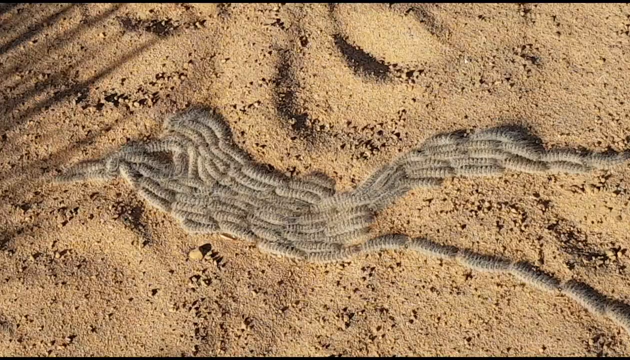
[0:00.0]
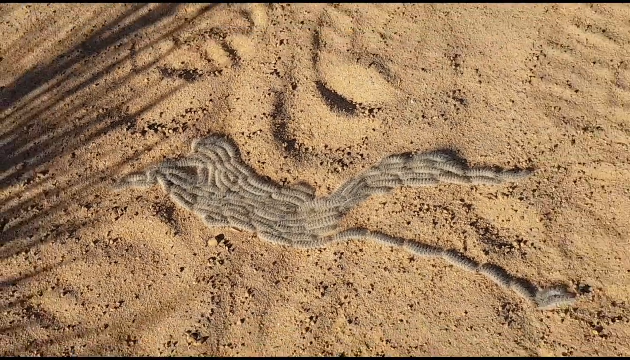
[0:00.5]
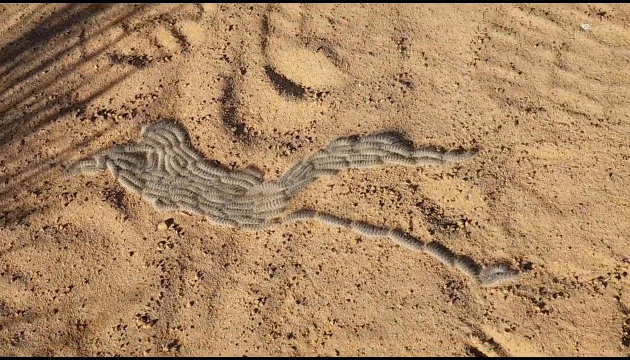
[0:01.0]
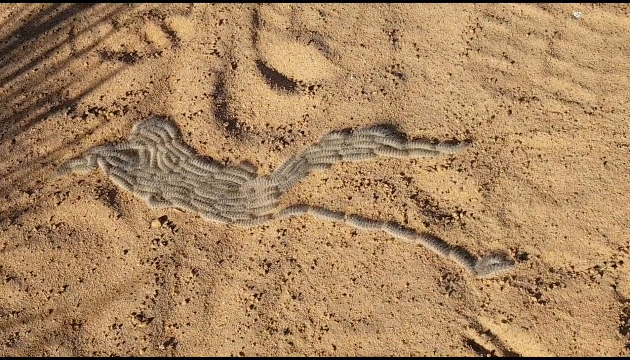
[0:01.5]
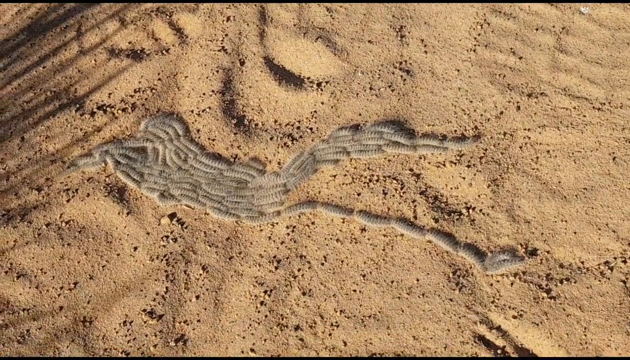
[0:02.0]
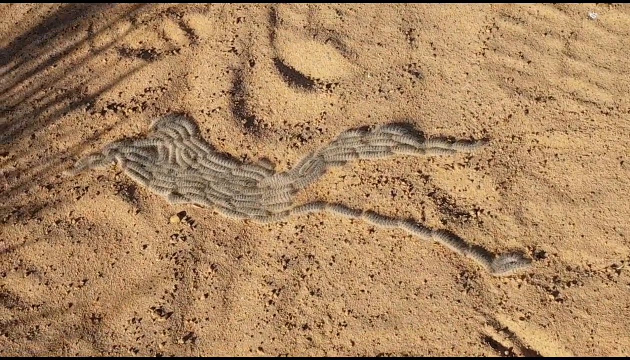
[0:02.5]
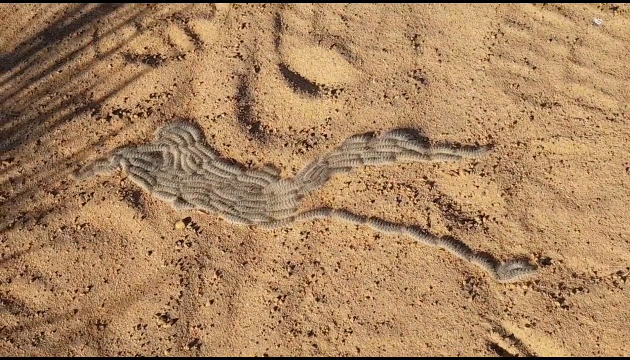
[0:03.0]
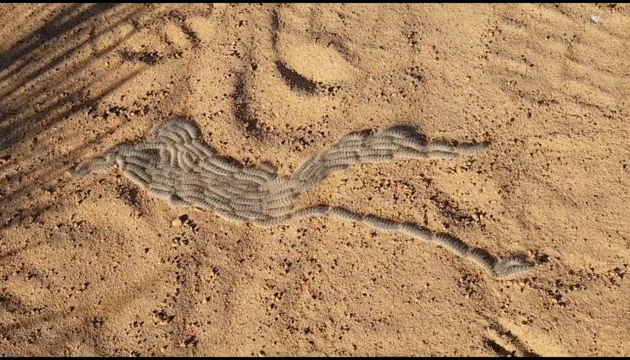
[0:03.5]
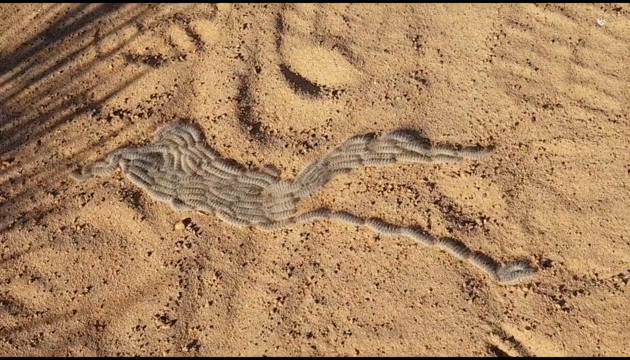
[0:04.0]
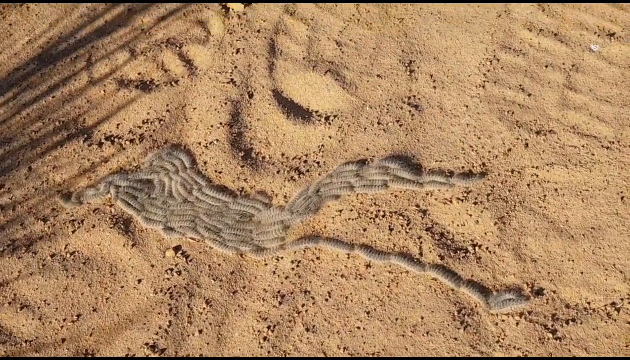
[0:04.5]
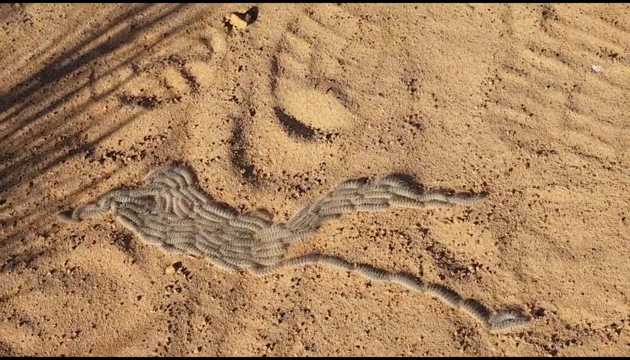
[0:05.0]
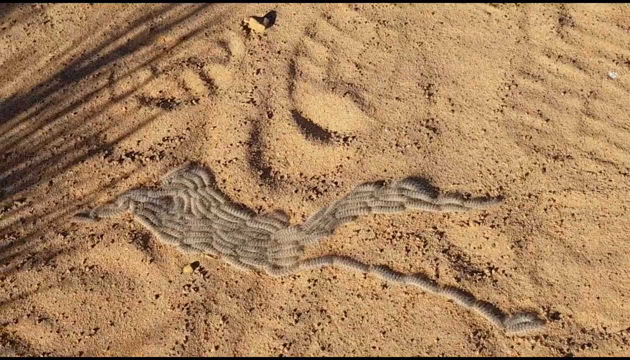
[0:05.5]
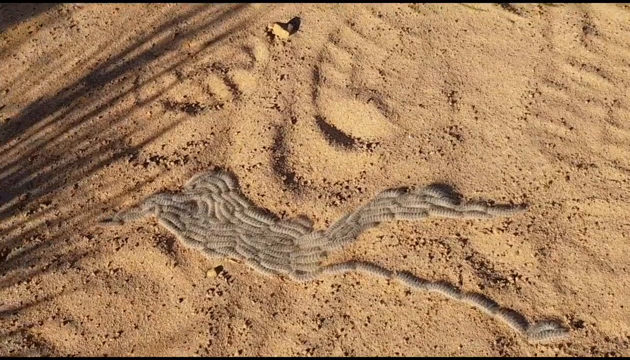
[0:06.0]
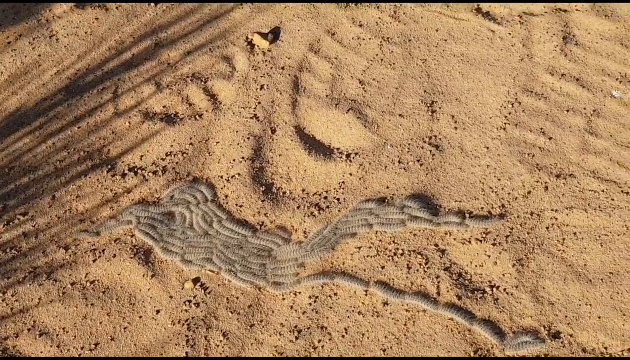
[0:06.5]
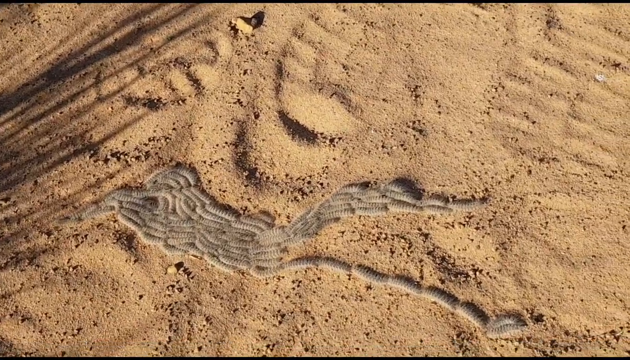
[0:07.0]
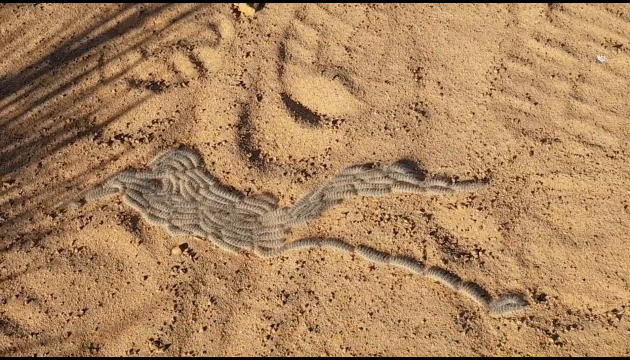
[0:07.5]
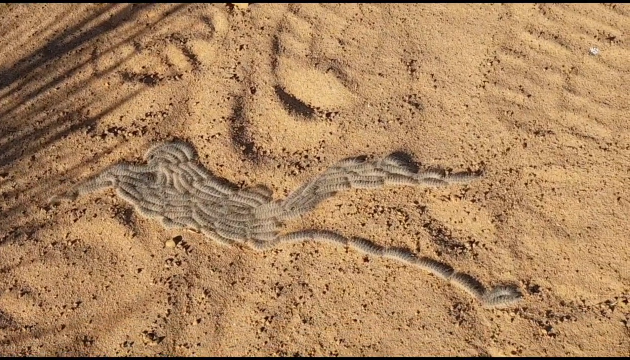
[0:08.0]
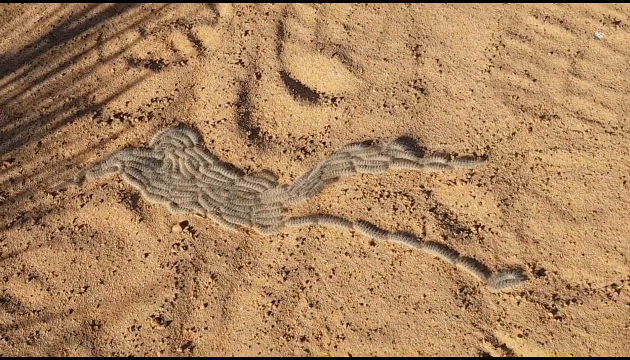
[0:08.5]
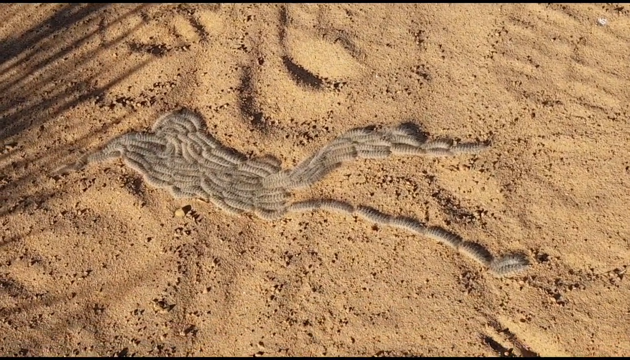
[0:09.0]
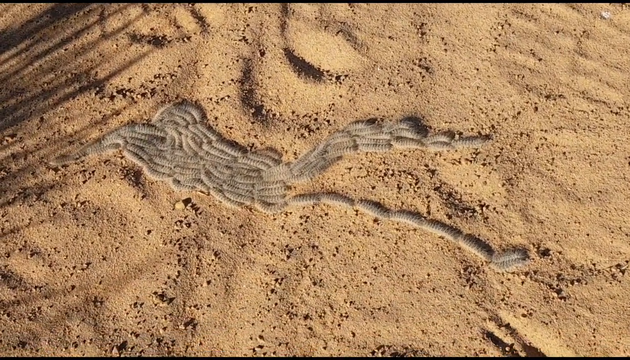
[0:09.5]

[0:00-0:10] Brown sand fills the view, and it looks like a desert. On it is some type of insect or larva that appears to be migrating. The movement is hard to notice without looking closely, but the creatures are inching their way slowly forward. They almost look like some kind of caterpillar. They seem to move together as one, in a kind of formation, and look like some type of larva.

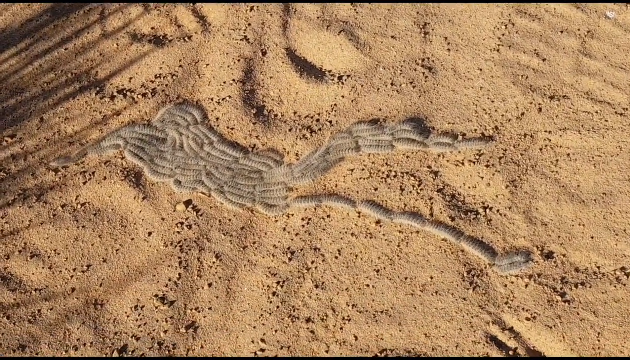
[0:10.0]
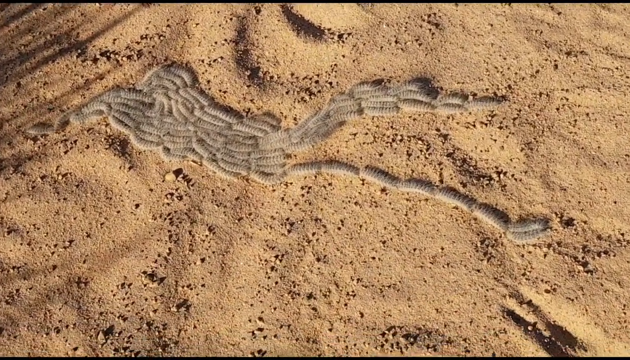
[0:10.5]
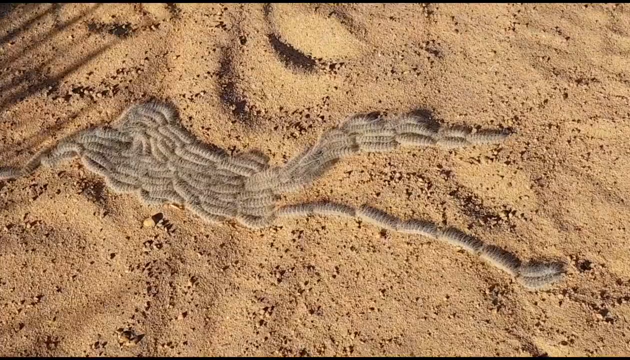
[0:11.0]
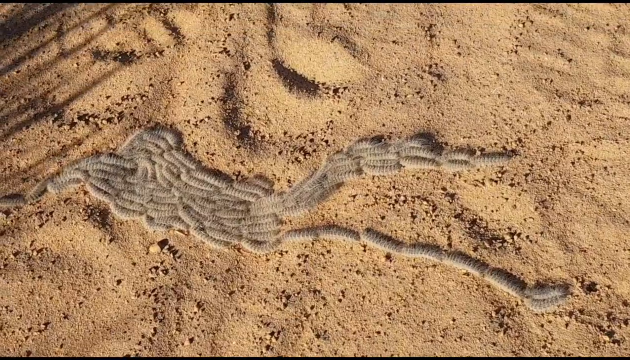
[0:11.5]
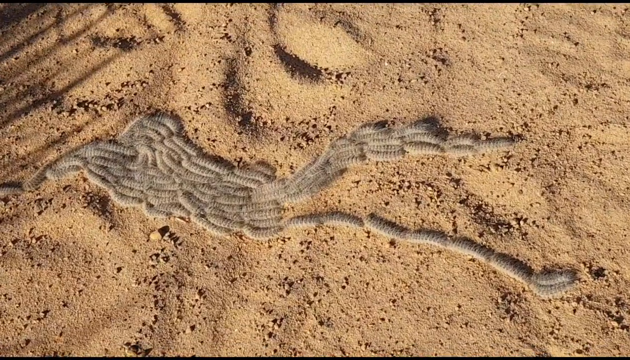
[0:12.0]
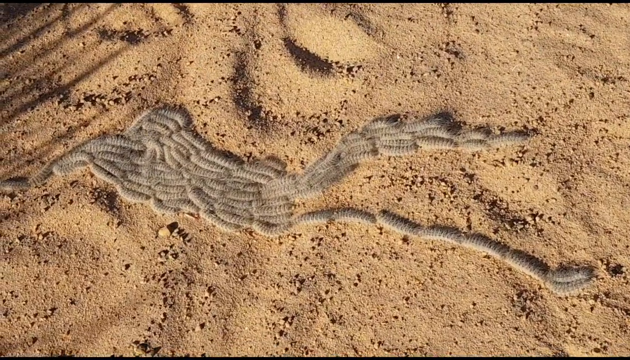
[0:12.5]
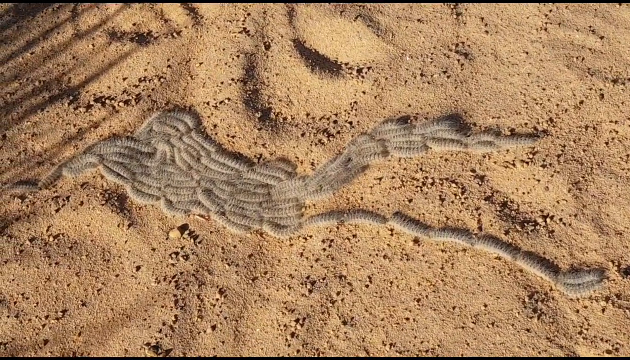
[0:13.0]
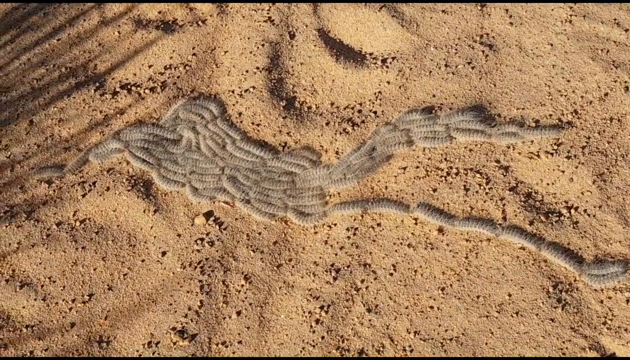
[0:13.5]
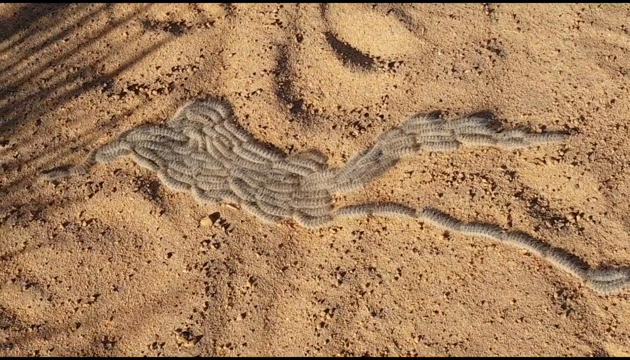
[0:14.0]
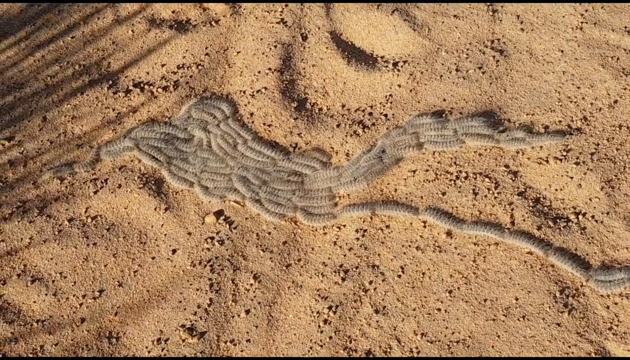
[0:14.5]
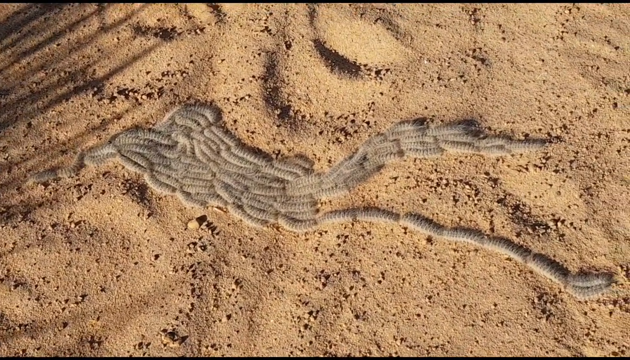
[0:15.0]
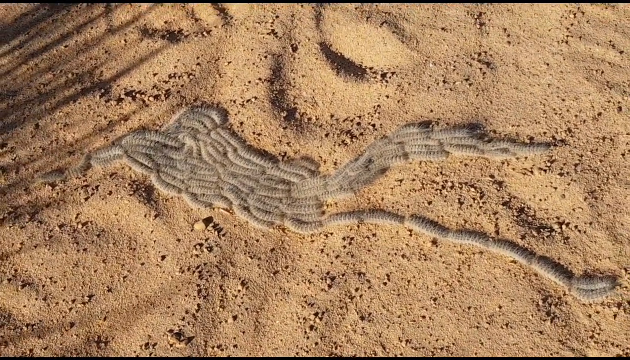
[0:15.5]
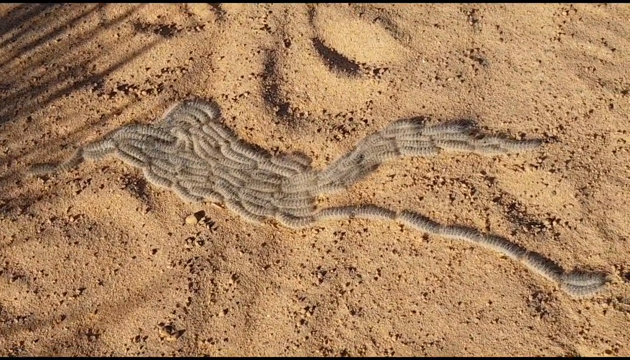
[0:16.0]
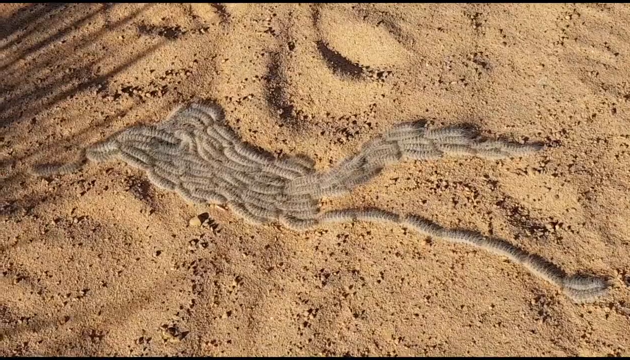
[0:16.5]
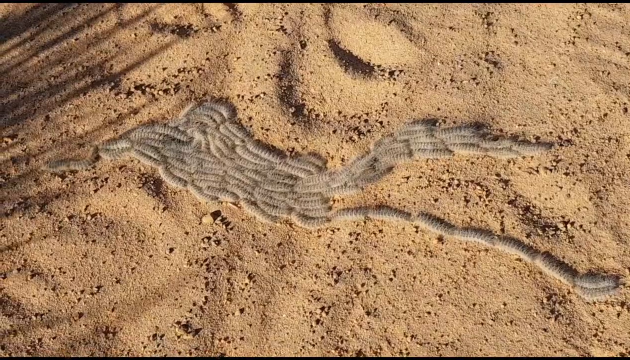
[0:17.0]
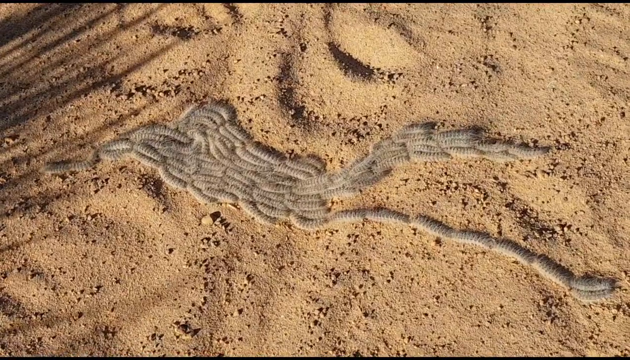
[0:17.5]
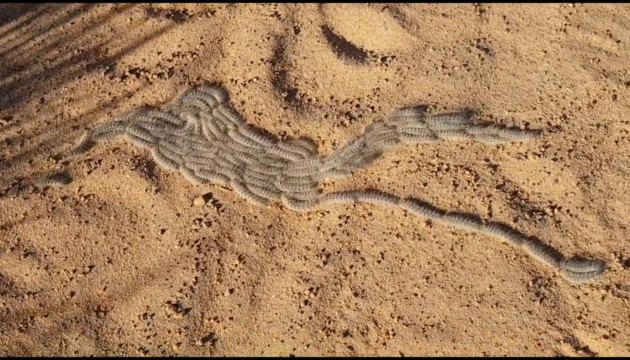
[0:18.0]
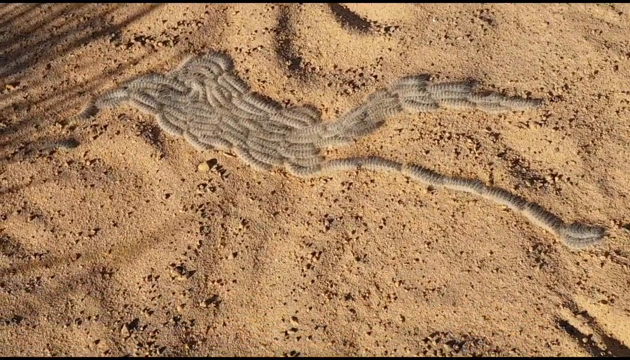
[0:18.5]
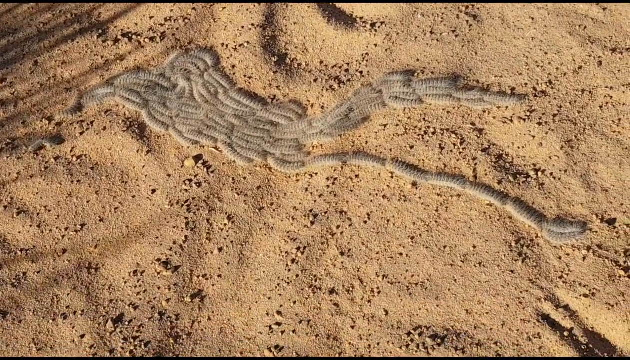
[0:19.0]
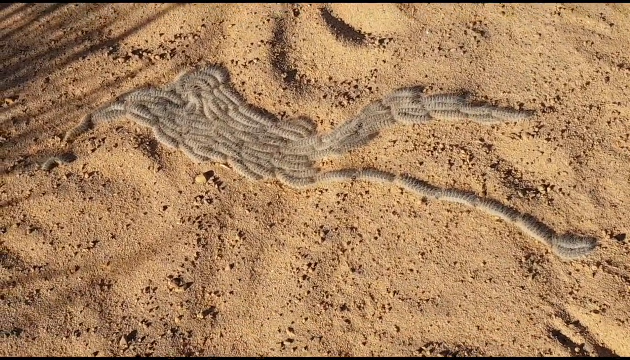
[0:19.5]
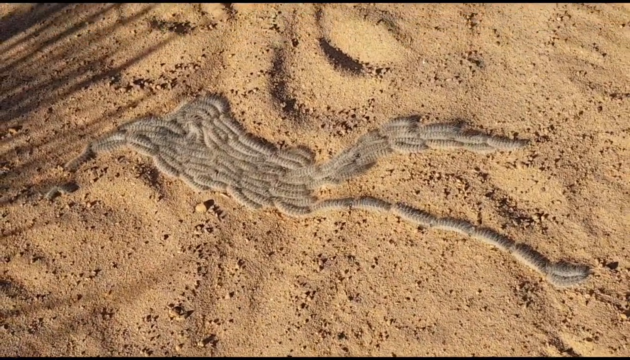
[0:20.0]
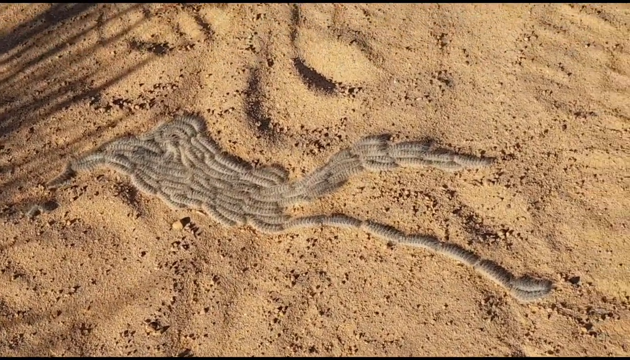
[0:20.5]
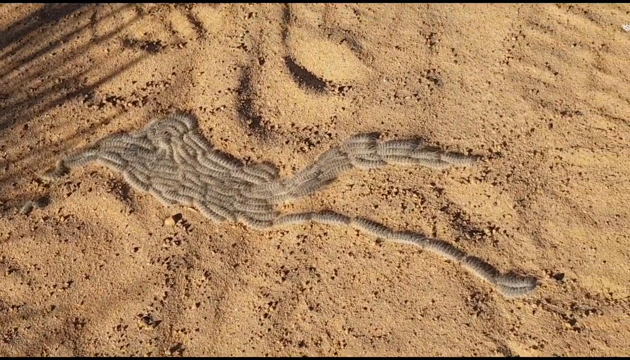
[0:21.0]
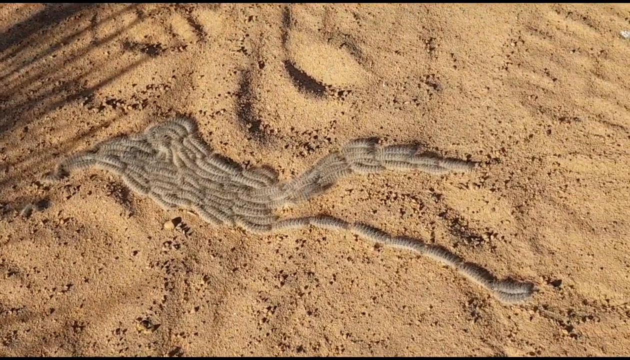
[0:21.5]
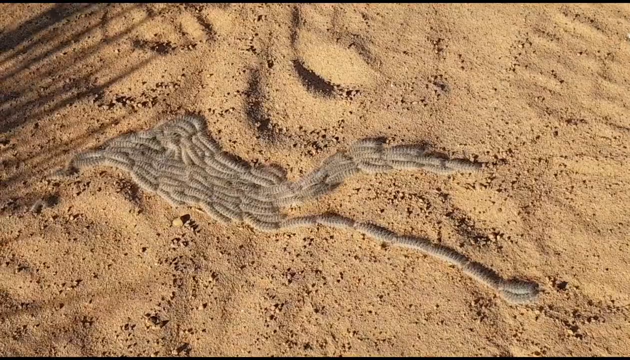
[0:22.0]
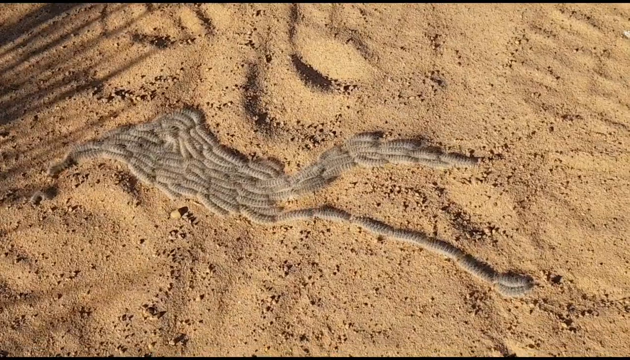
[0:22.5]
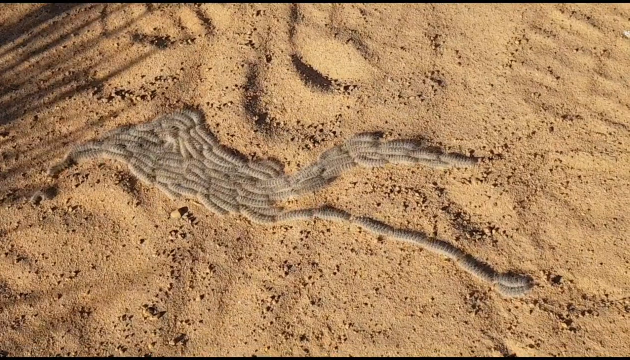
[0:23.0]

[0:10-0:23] Larvae, or some kind of caterpillar, move on the sand or desert floor. They inch slowly, moving together as one in a kind of formation, so slowly that they barely seem to be moving. At the front, one of them has moved off from the rest of the group; it kind of looks like it falls off, moving to the left and jumping off, and it is no longer connected to the other larvae. The larvae are gray and look to be about an inch long, and their feet cannot really be seen. They are all connected to each other.